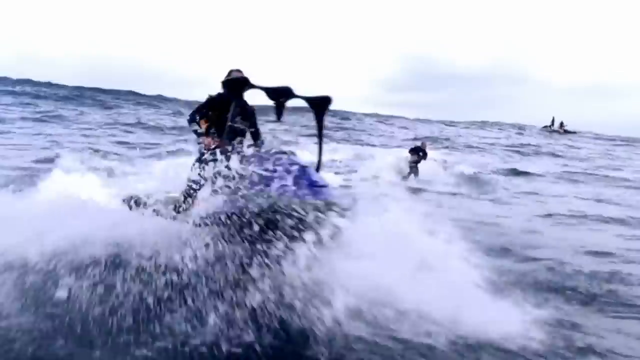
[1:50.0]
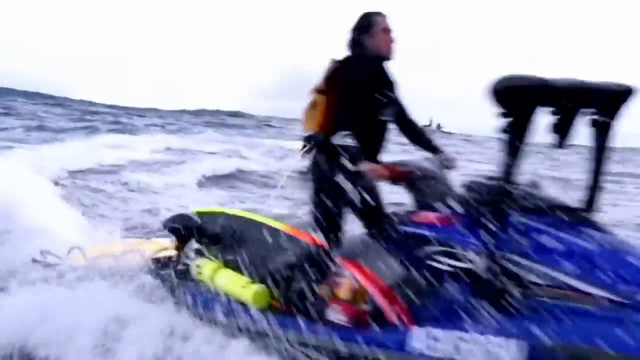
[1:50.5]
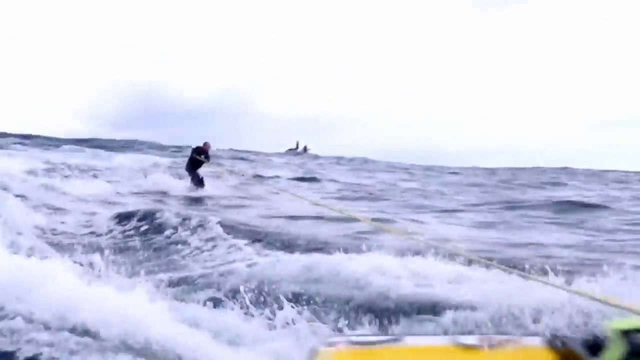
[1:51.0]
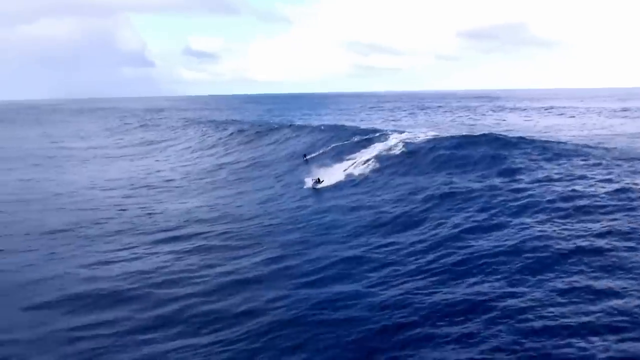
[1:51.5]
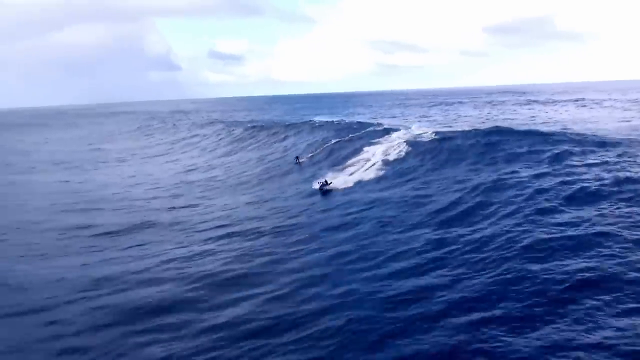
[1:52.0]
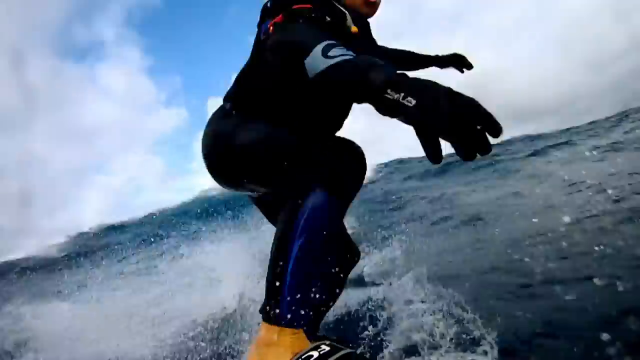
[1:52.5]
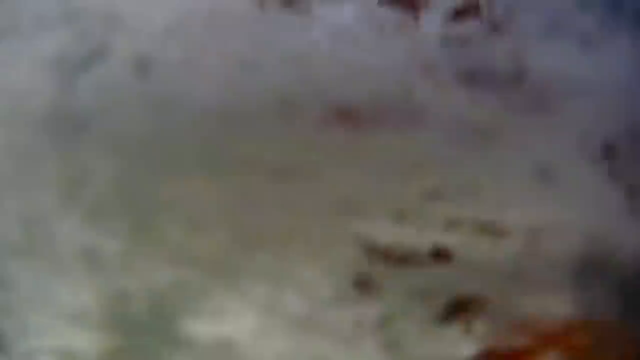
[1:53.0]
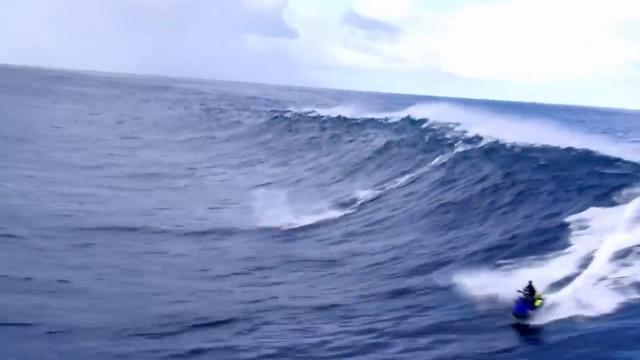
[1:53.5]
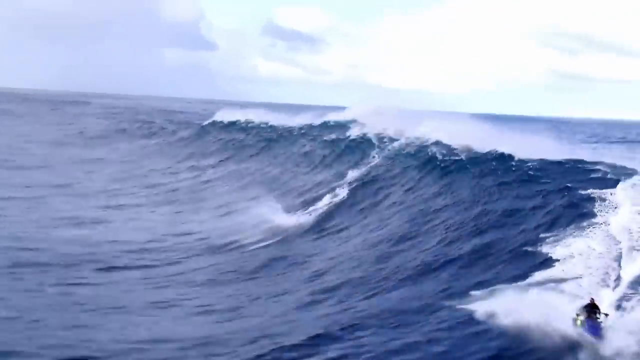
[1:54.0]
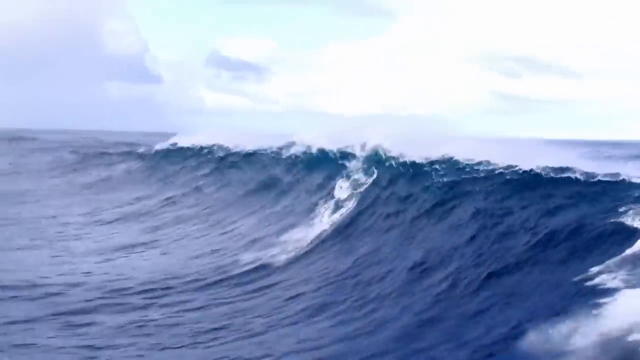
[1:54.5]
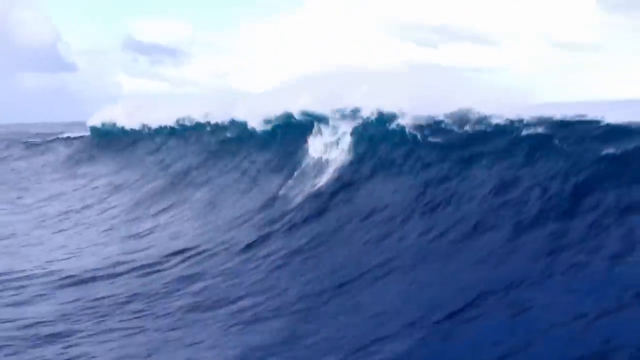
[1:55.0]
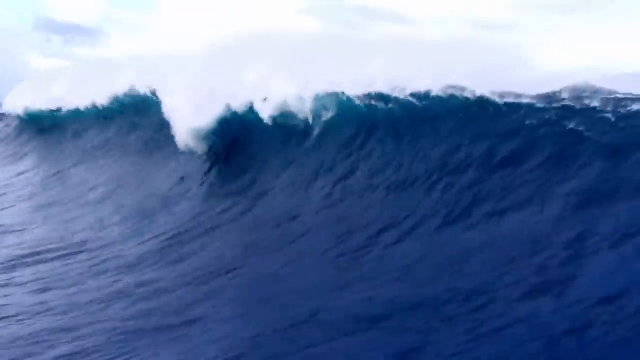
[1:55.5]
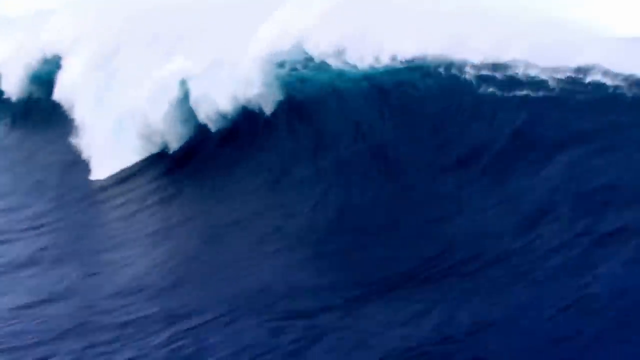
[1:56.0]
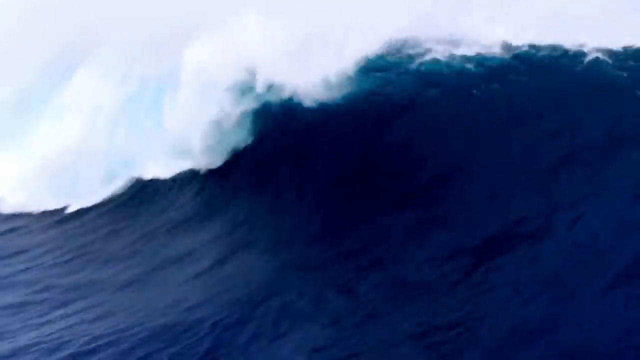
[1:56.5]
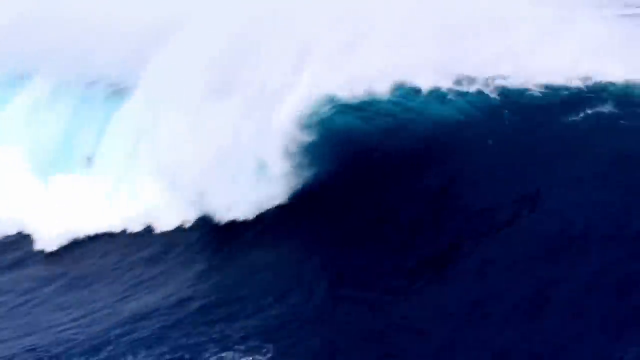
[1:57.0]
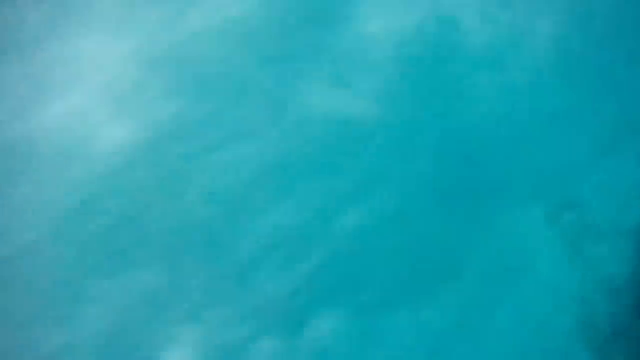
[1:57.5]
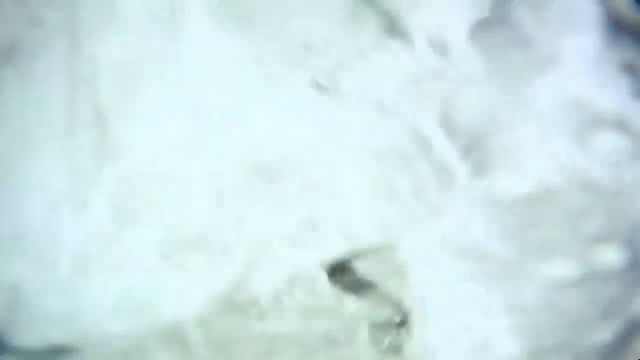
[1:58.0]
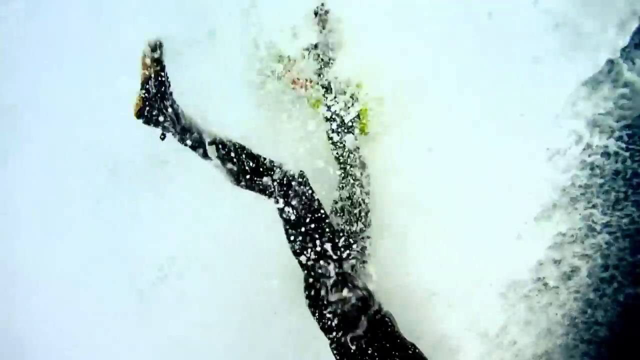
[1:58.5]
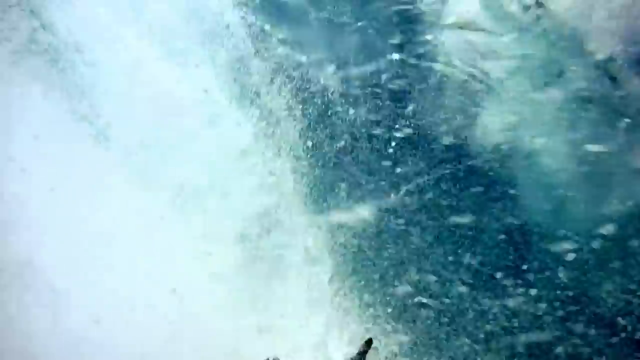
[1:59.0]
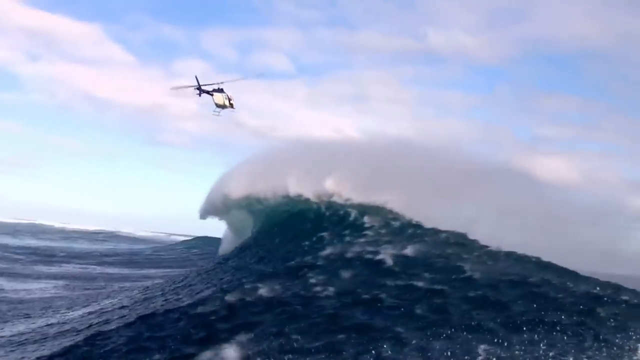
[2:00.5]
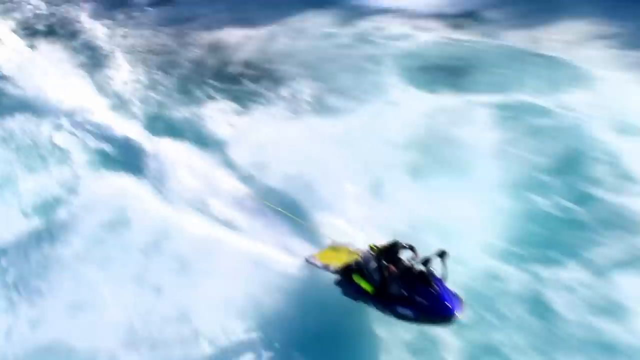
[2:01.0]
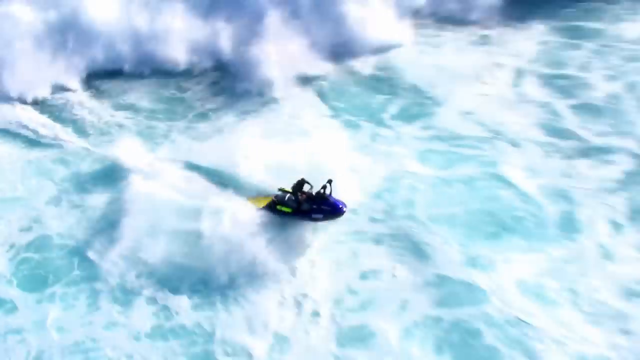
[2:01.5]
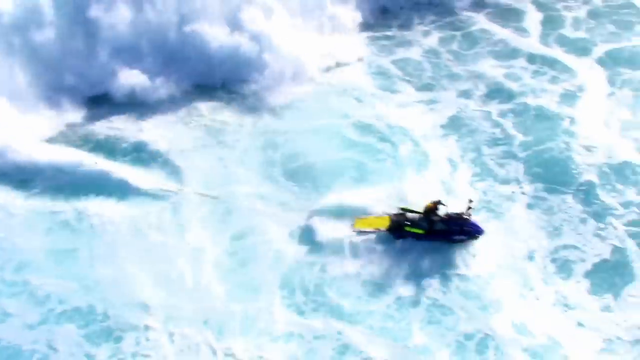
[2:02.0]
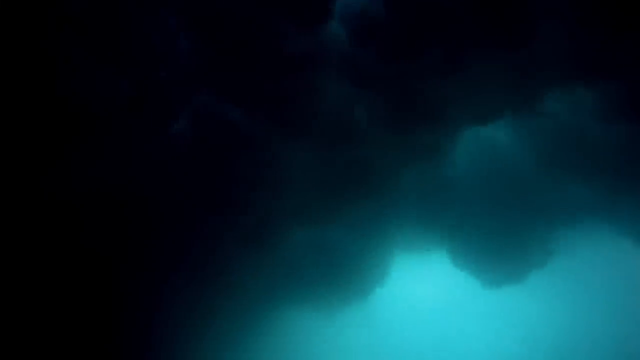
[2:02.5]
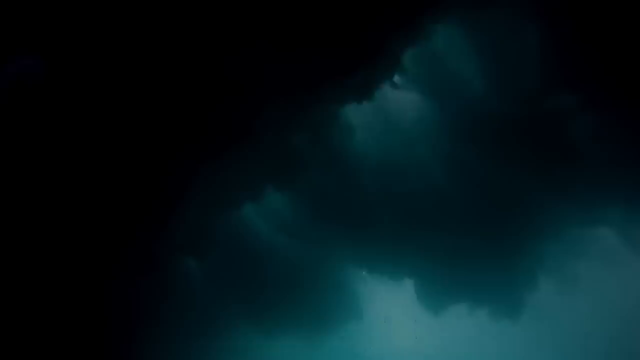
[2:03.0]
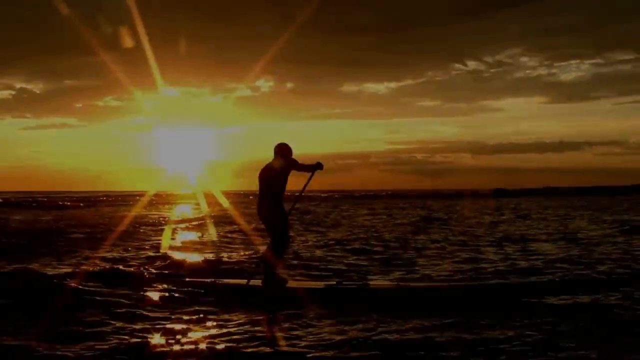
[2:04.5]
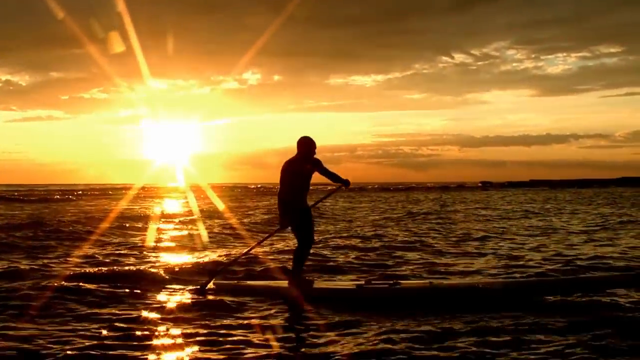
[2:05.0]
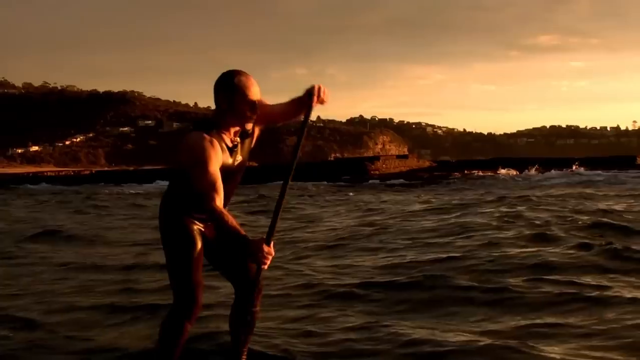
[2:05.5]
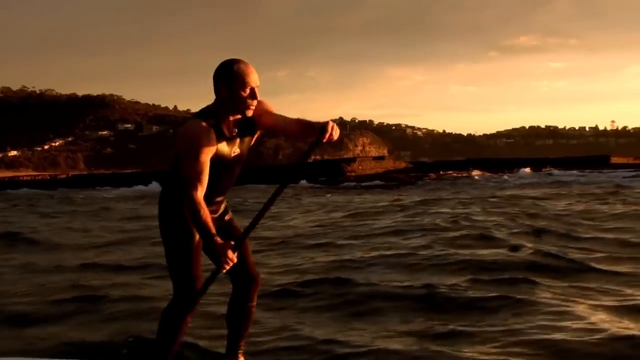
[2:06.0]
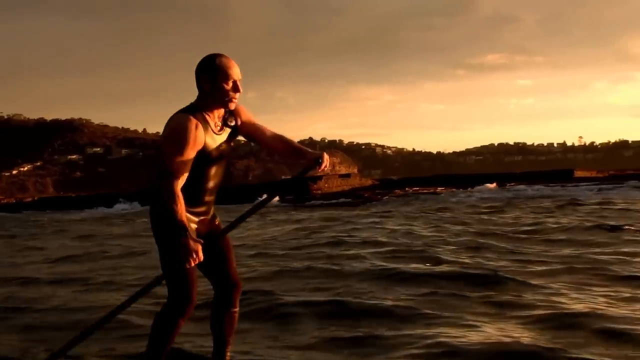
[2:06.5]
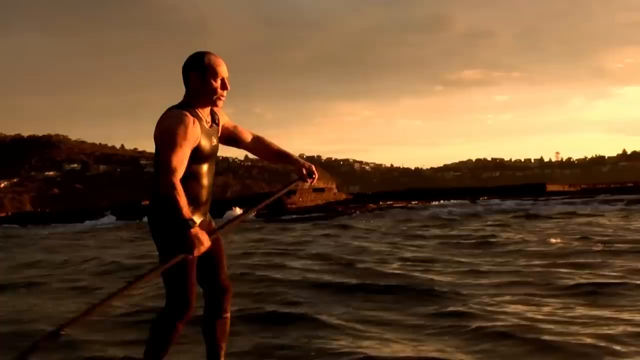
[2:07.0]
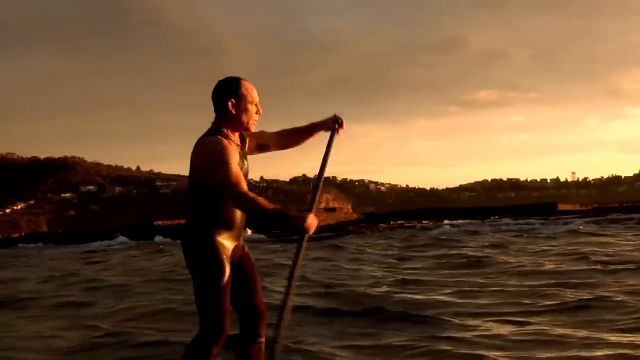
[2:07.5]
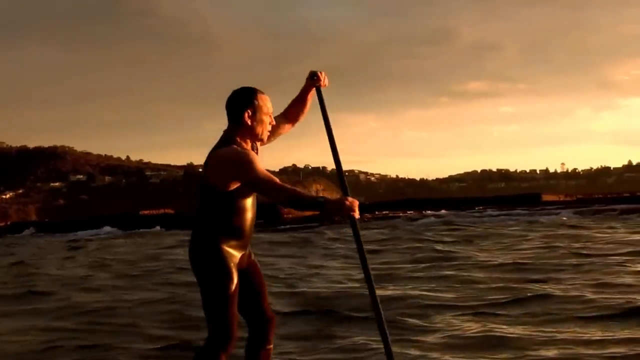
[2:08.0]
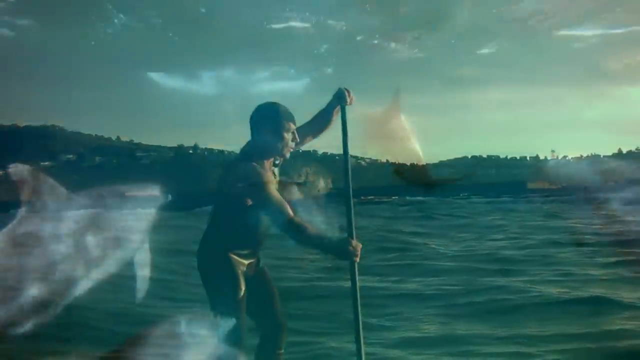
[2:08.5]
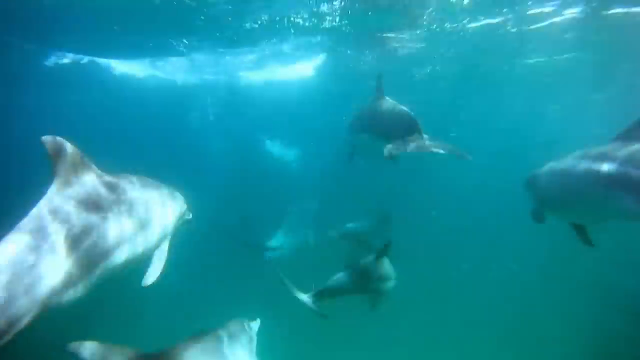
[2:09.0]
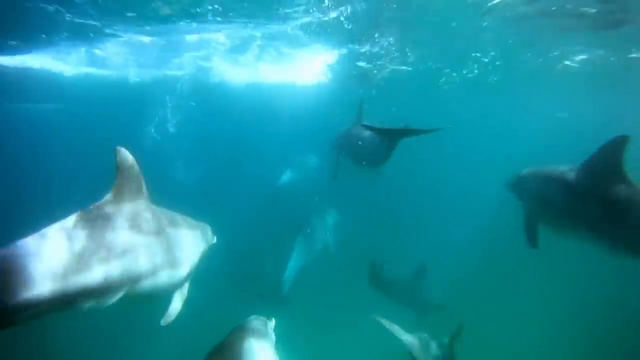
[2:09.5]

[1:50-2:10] A man rides a surfboard across the water as a large wave in the middle of the sea pushes the surfboard along. Another person on a paddle board paddles along the water. Under the water there are a number of sharks. In the sky there are clouds that blend in with the white sky. A number of people surf across the water.